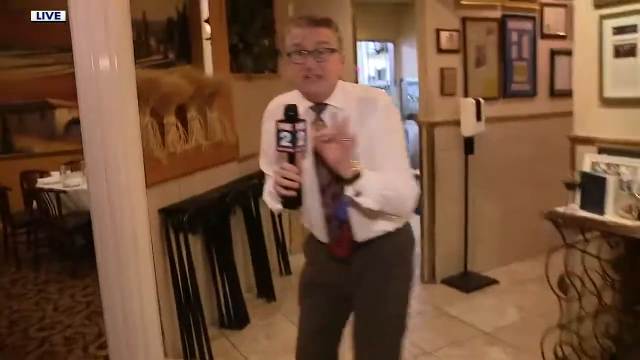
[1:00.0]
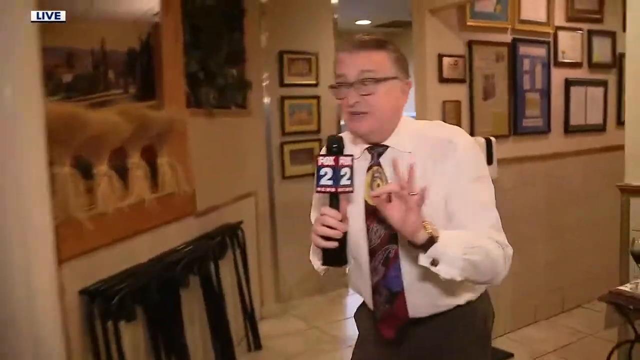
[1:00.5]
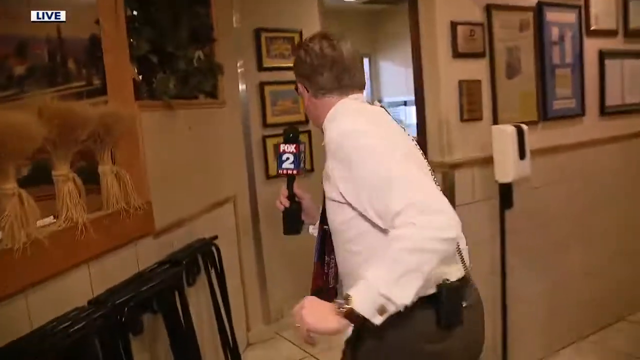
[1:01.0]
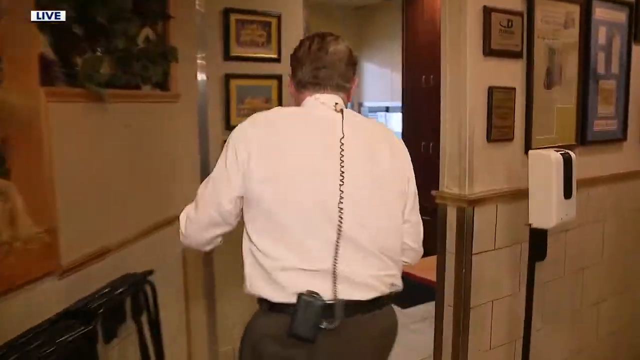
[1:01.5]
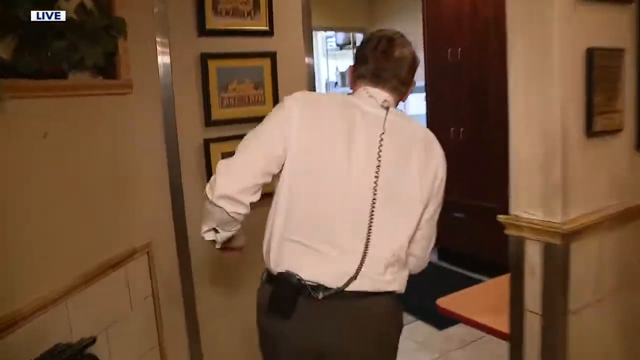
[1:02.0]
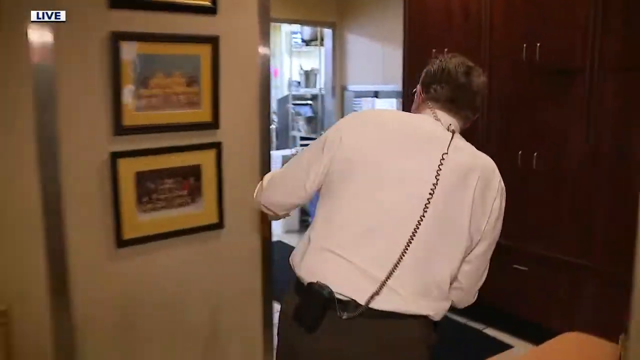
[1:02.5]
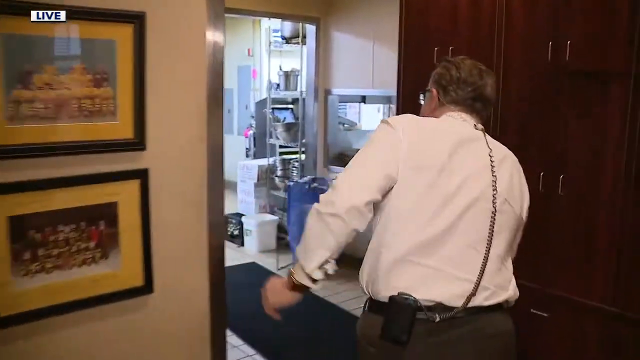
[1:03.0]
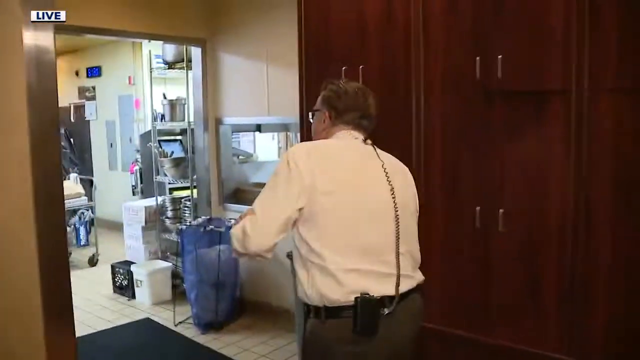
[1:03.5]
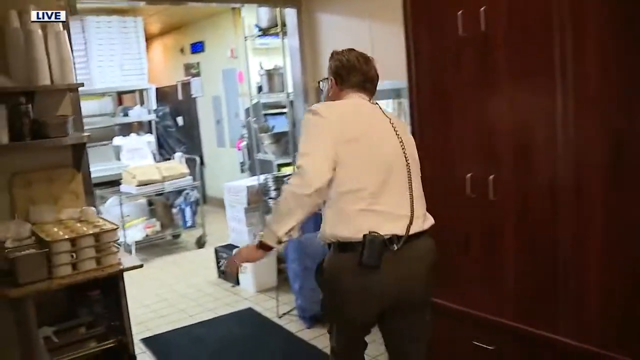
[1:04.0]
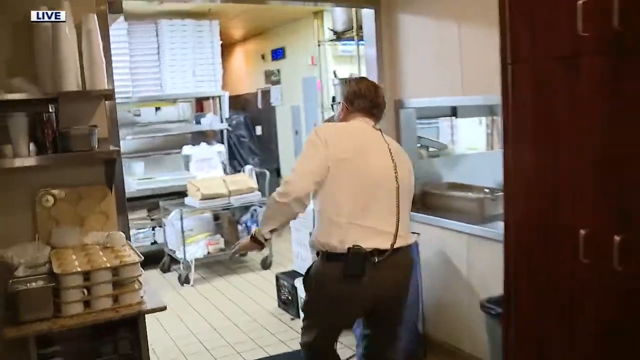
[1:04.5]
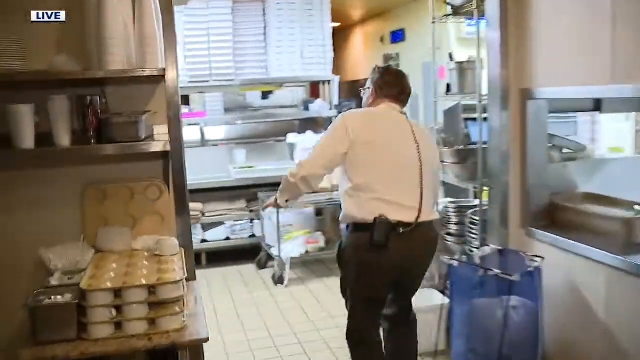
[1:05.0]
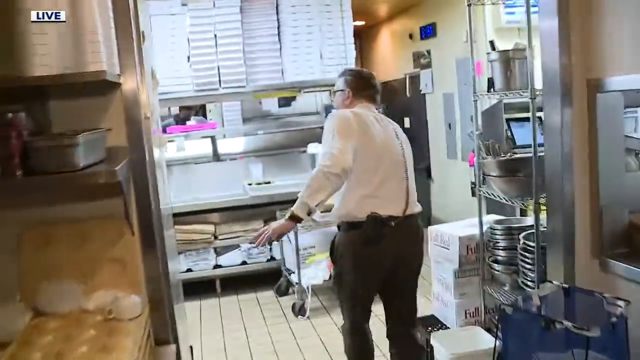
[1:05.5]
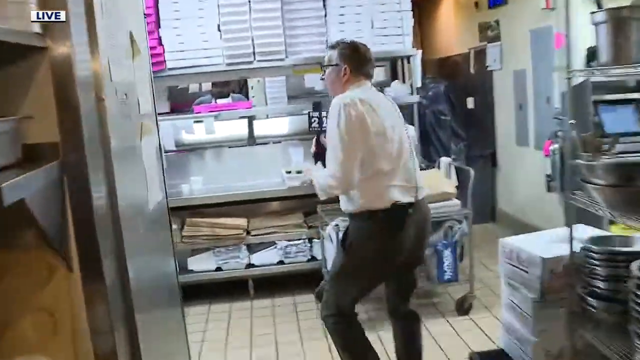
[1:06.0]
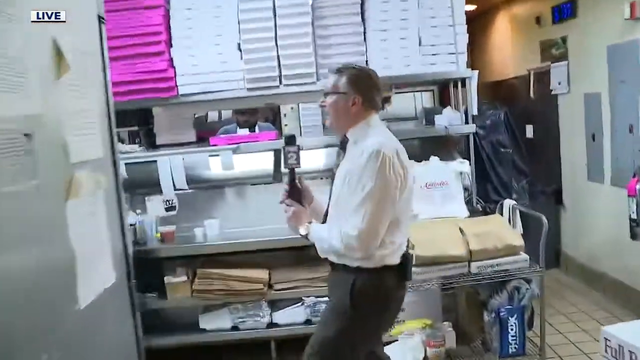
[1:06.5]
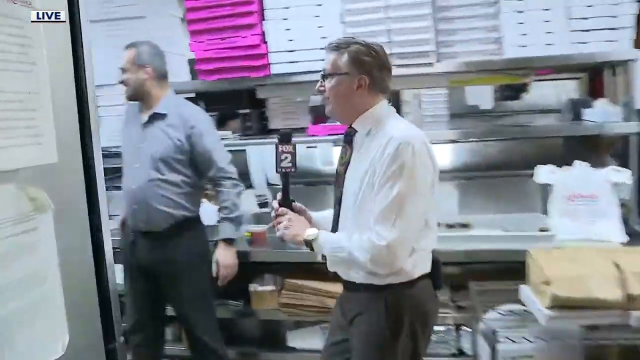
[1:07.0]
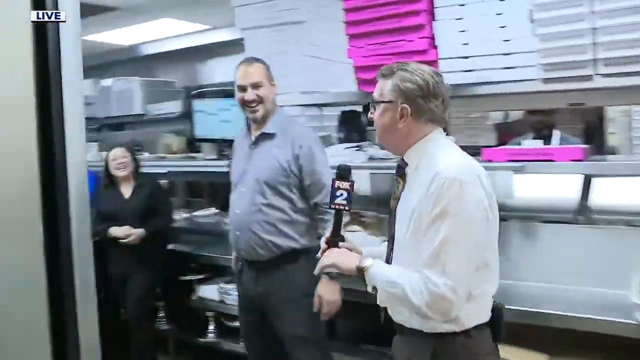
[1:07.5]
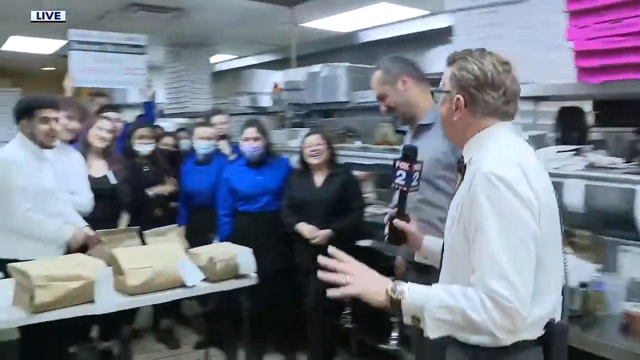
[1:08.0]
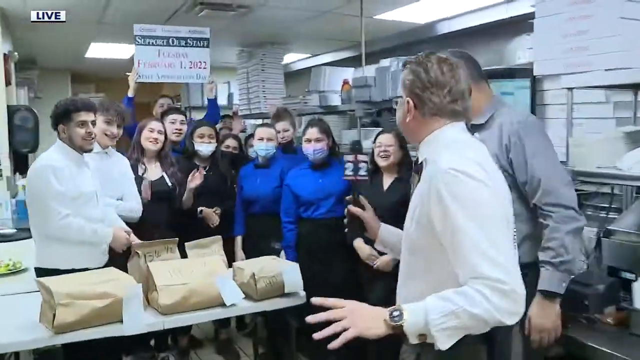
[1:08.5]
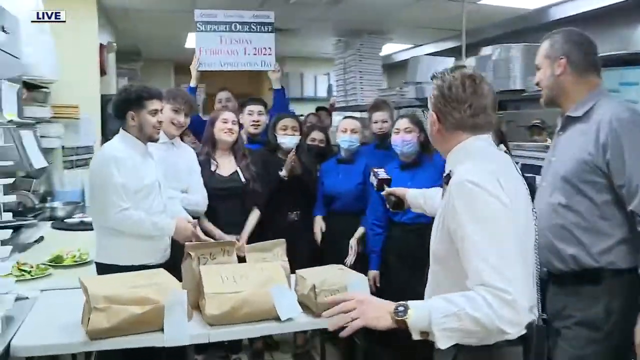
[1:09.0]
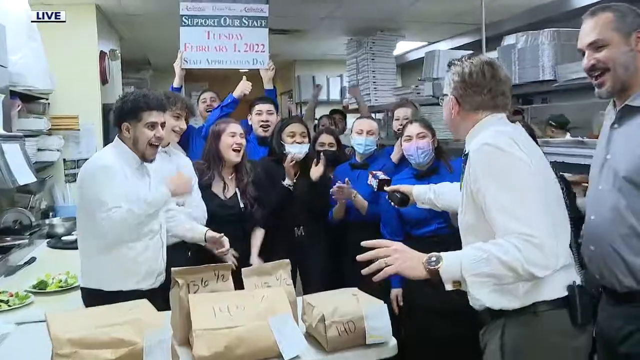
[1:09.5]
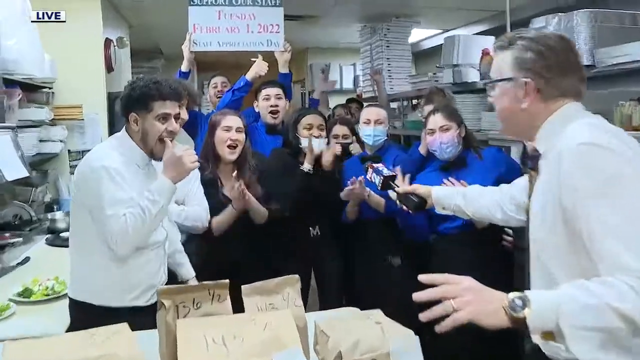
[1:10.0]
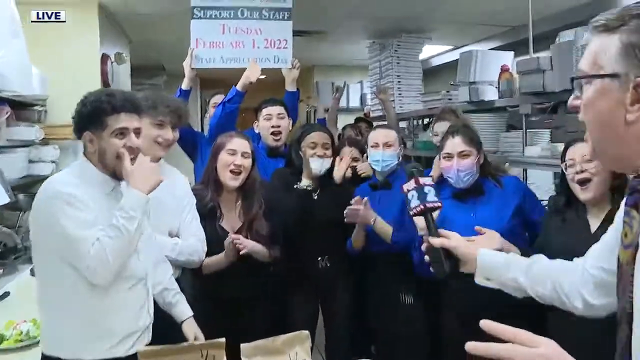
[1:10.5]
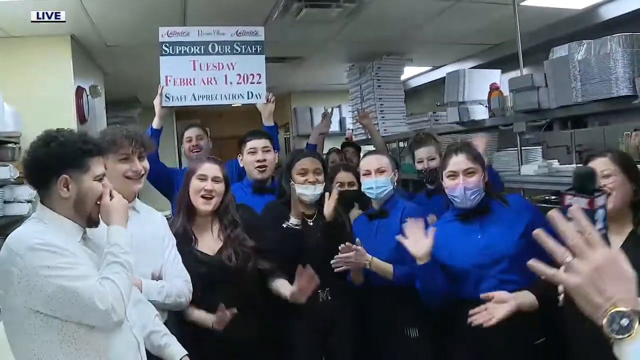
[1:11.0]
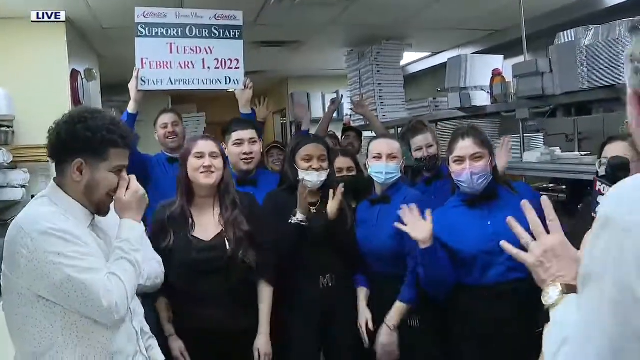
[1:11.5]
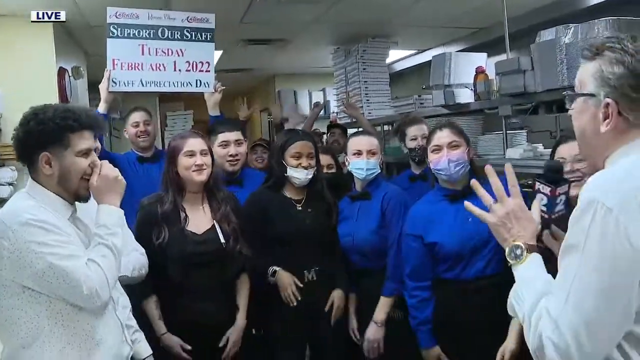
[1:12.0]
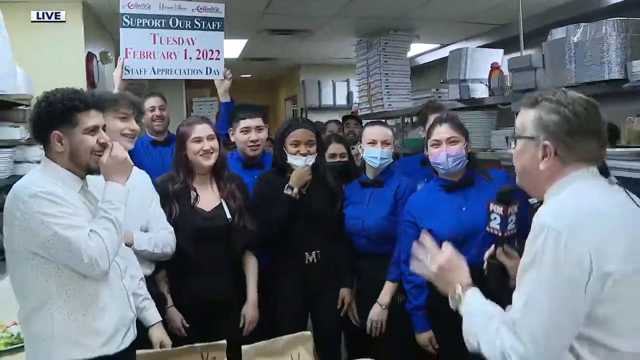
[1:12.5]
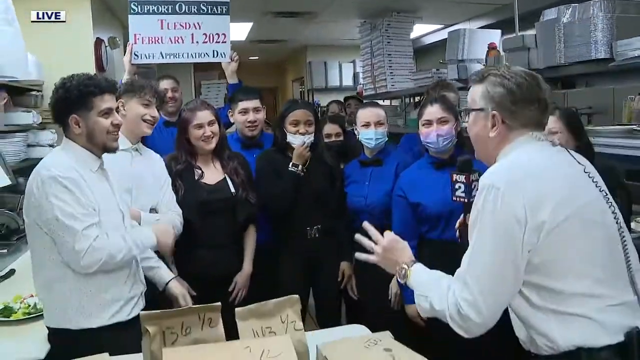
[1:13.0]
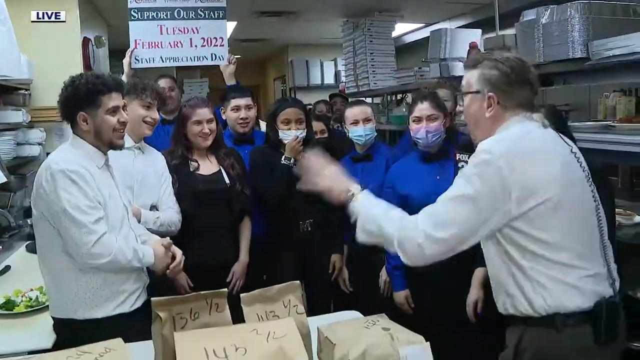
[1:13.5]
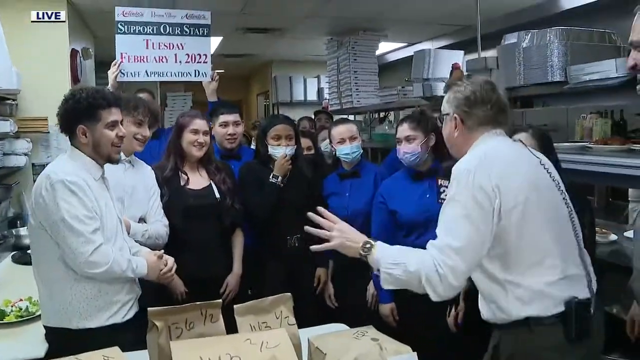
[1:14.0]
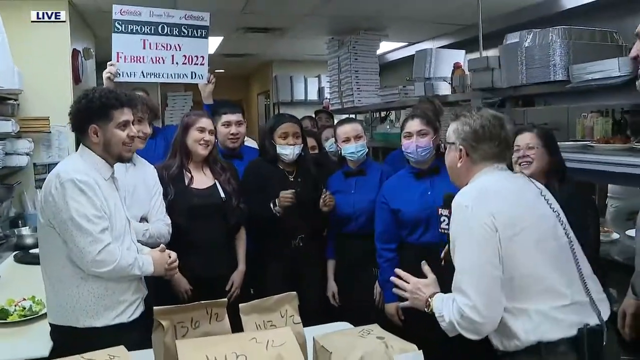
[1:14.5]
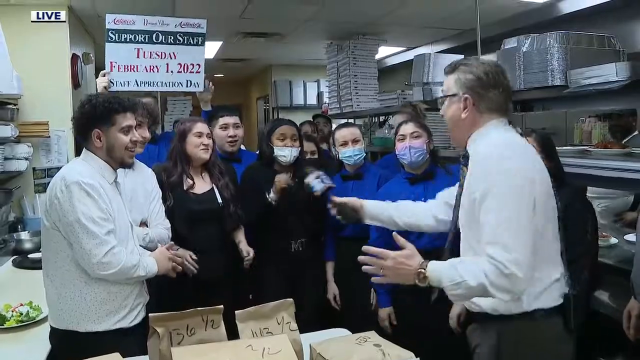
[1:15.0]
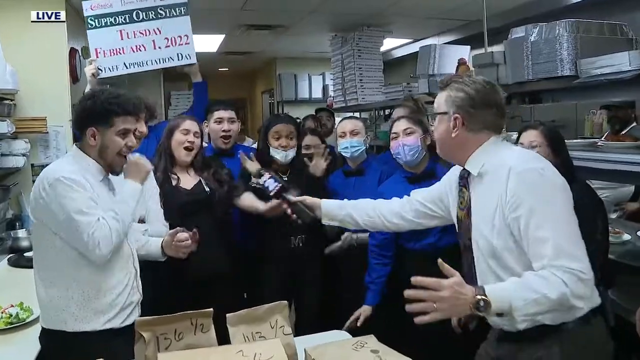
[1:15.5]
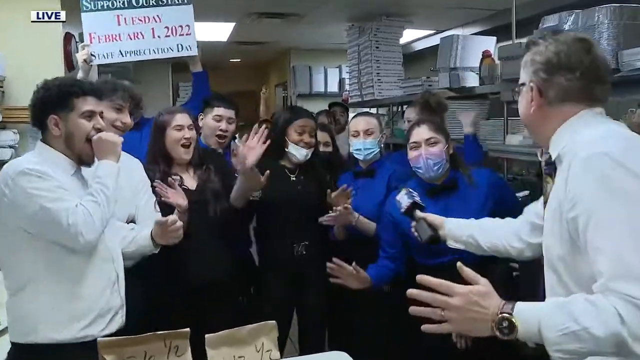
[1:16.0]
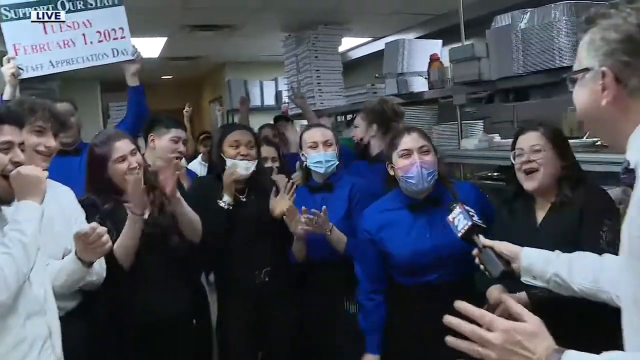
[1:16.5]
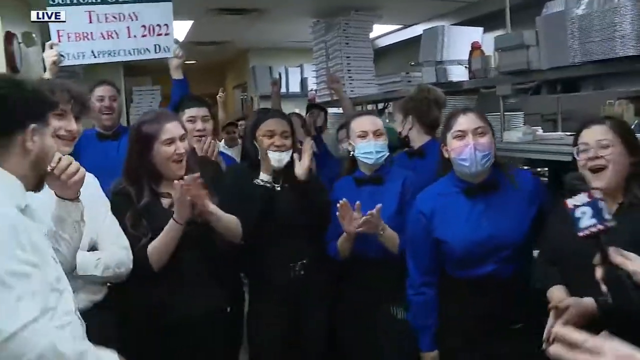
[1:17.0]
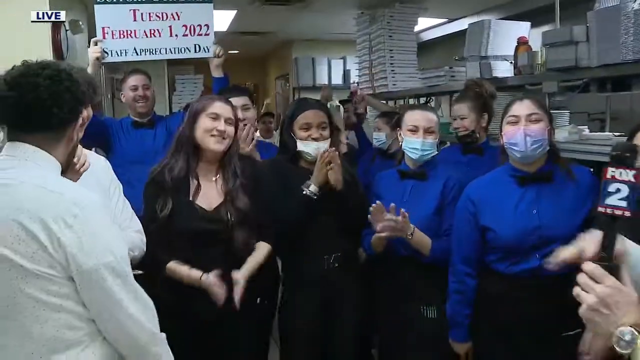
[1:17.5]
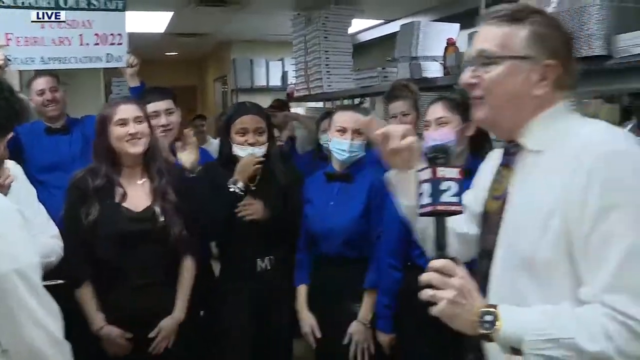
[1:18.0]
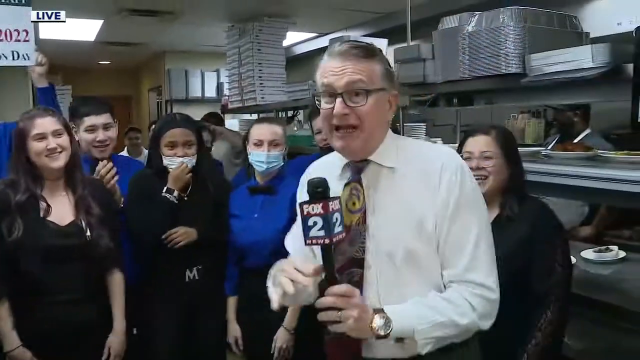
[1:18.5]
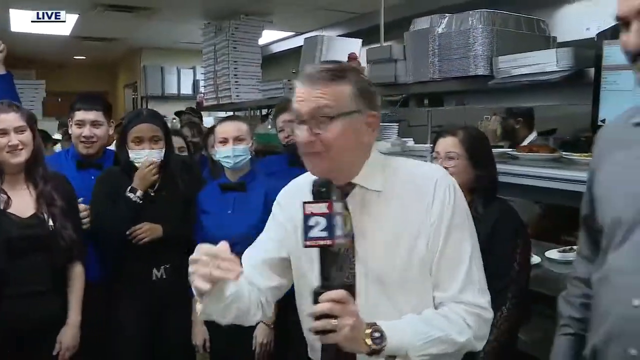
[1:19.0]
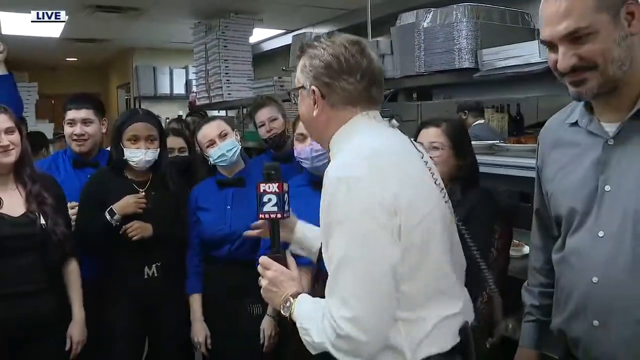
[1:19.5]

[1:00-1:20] The reporter scampers down the hall toward the back of the restaurant, passes the bathroom and enters the kitchen. On top of metal shelves are rows and stacks of boxes in pink, white and off-white, and below them are plastic bags and brown paper bags. He approaches the restaurant staff inside and is approached by the tall man in the gray shirt. The kitchen staff include the chef, who looks Latino and has curly black hair, and many female staff, including two women with masks and long-sleeved blue shirts. Someone stands in the back with the employee appreciation sign. As the reporter aims the microphone their way, they answer and the employees cheer, and he does this twice.